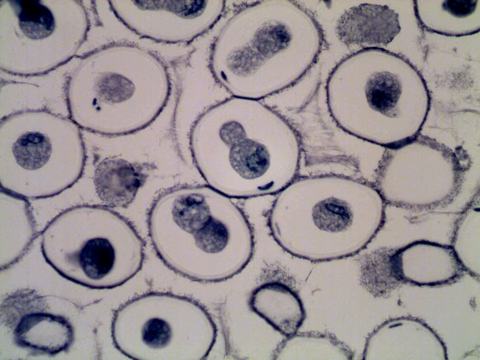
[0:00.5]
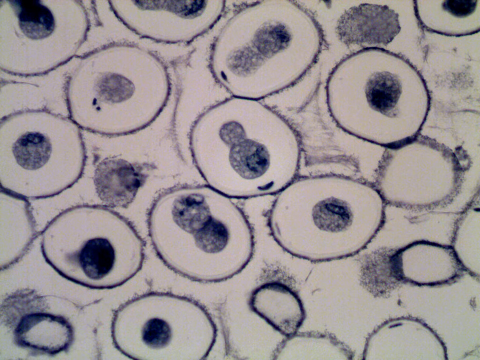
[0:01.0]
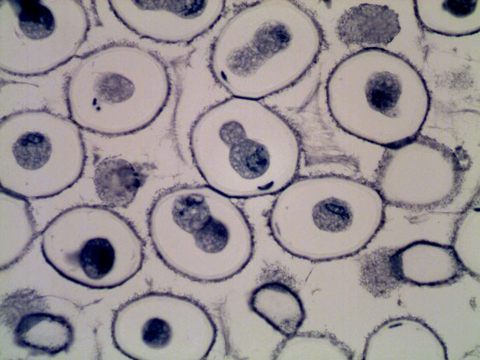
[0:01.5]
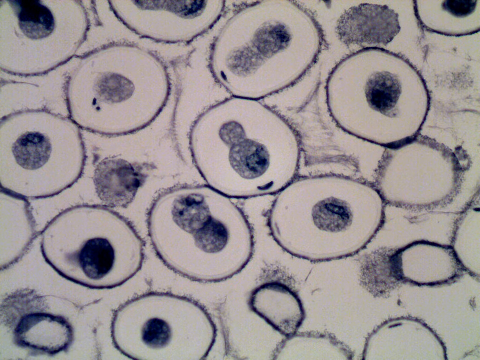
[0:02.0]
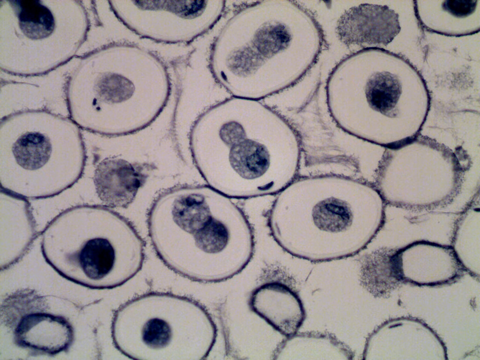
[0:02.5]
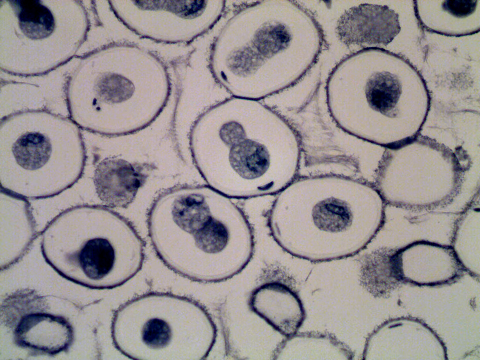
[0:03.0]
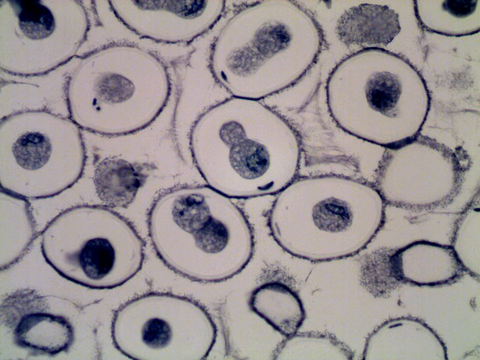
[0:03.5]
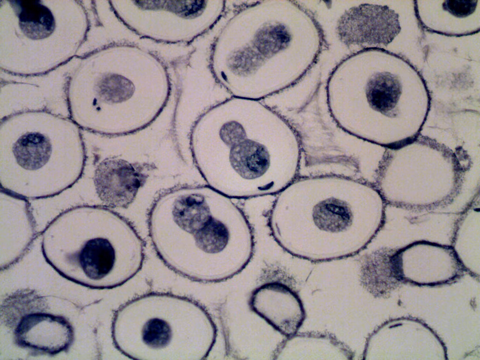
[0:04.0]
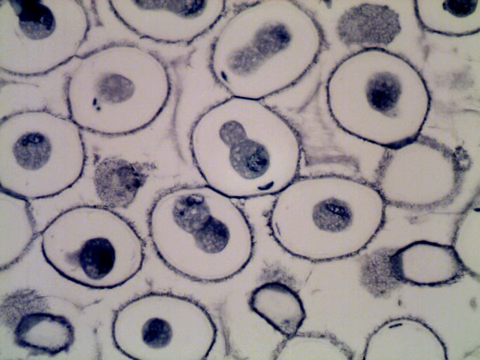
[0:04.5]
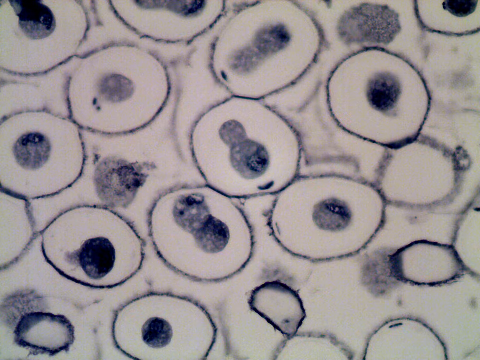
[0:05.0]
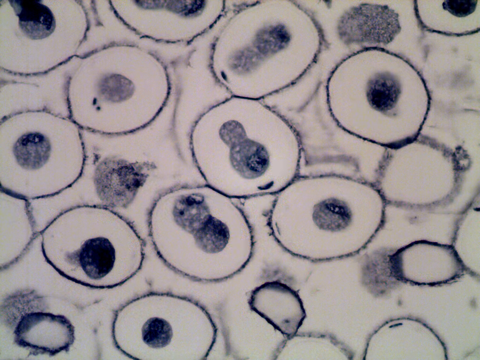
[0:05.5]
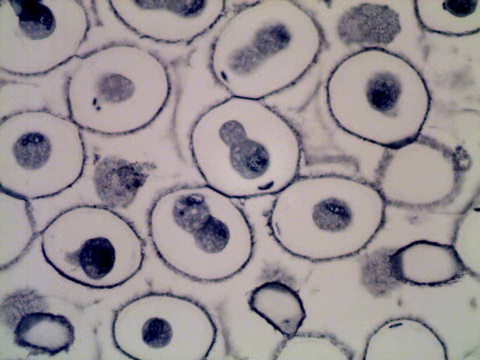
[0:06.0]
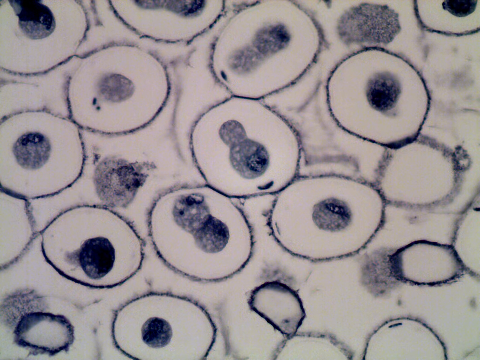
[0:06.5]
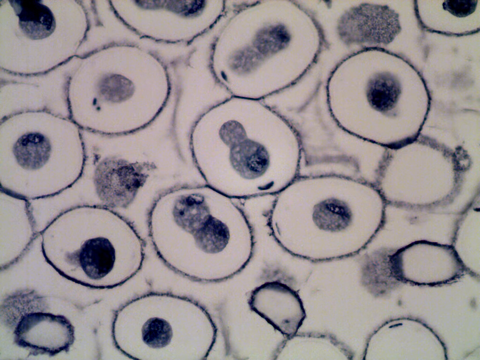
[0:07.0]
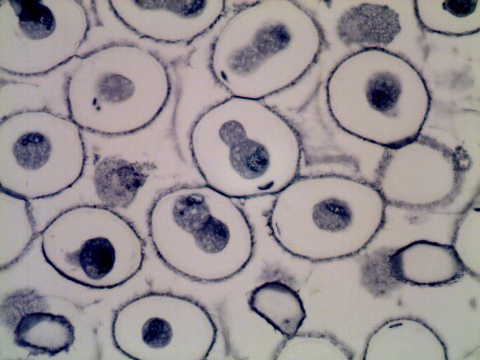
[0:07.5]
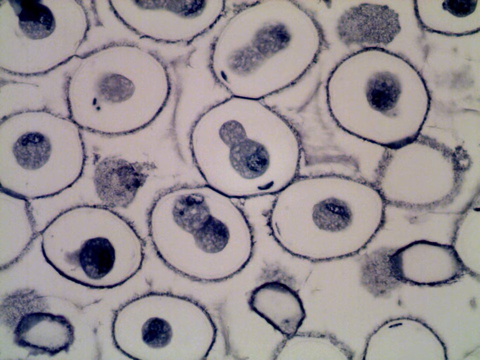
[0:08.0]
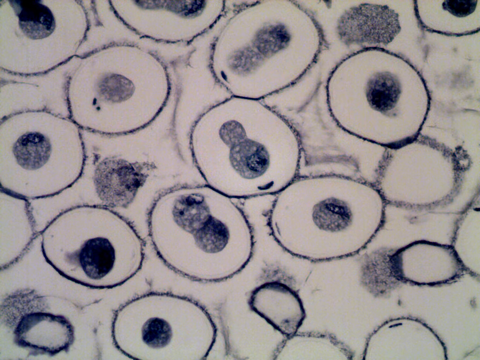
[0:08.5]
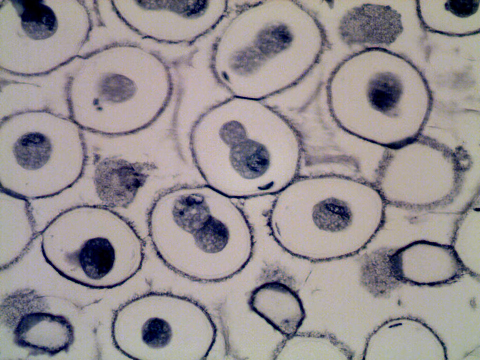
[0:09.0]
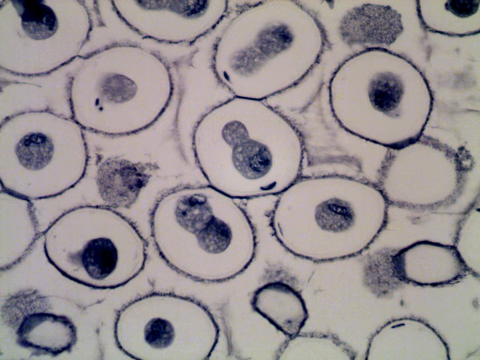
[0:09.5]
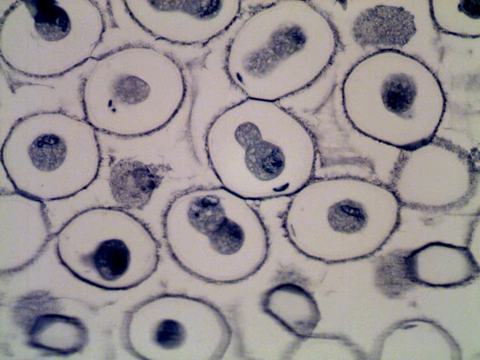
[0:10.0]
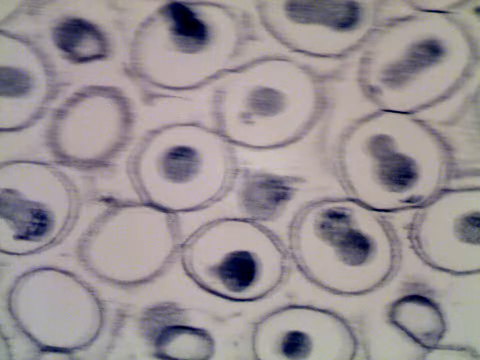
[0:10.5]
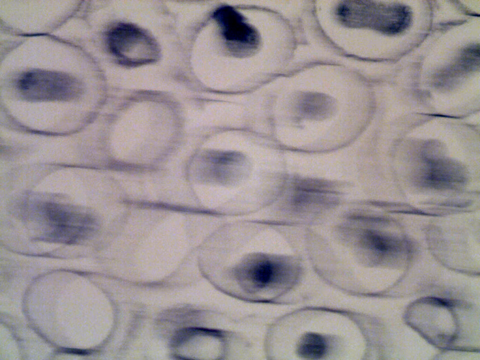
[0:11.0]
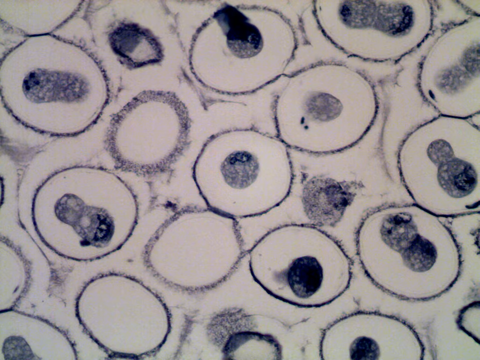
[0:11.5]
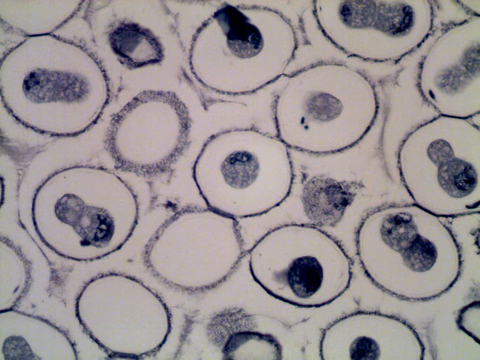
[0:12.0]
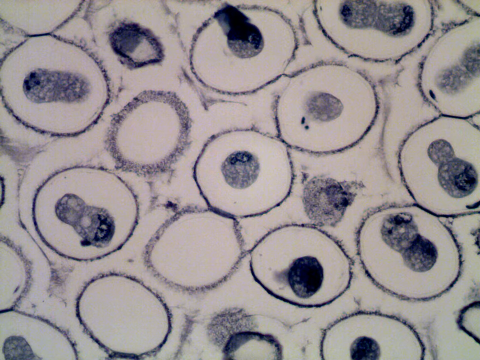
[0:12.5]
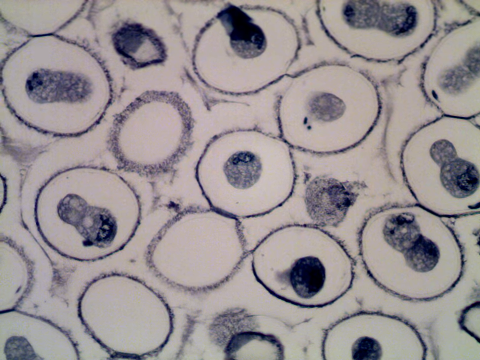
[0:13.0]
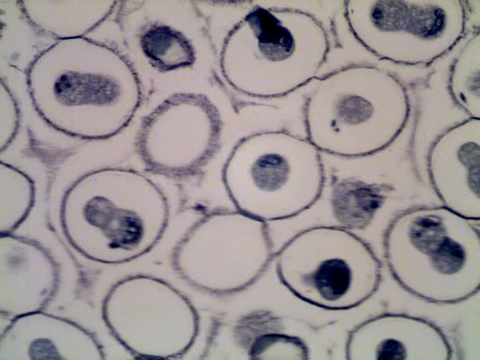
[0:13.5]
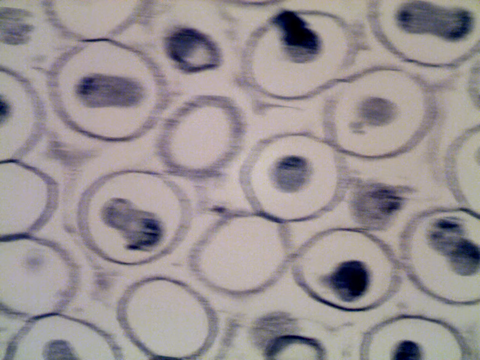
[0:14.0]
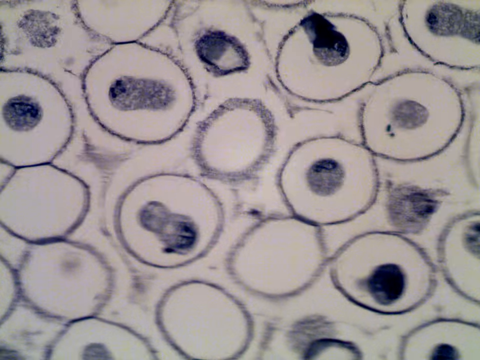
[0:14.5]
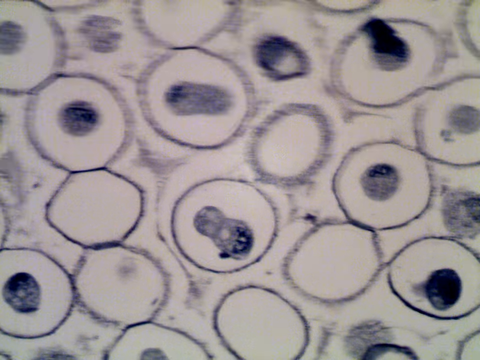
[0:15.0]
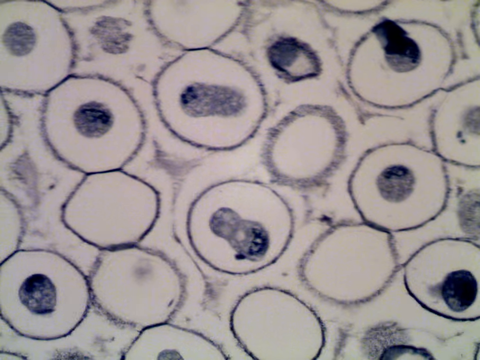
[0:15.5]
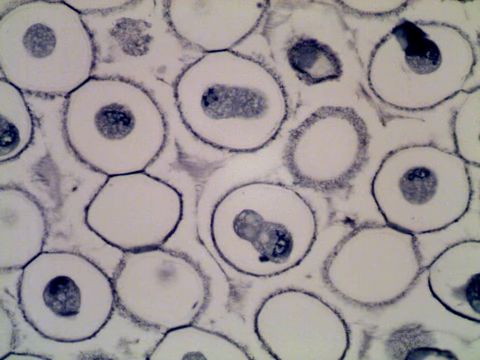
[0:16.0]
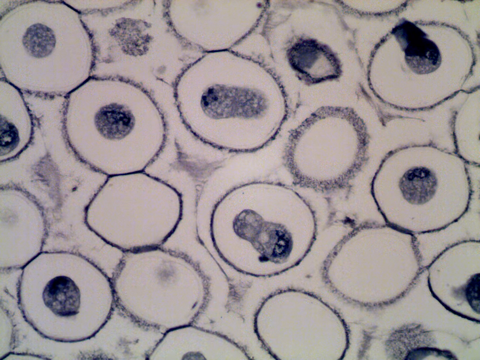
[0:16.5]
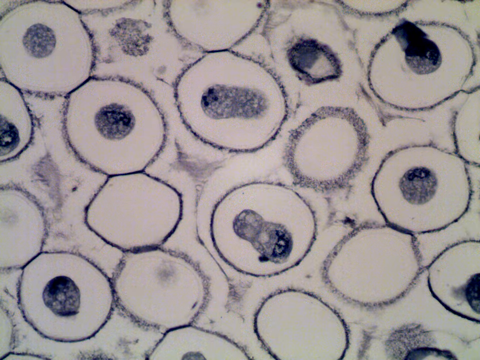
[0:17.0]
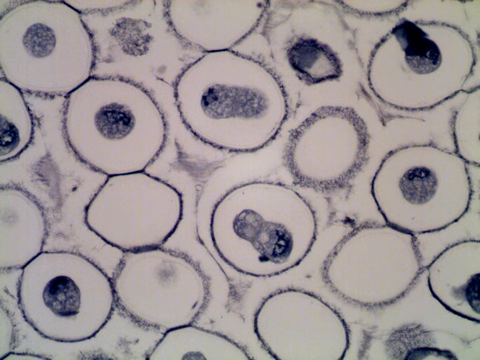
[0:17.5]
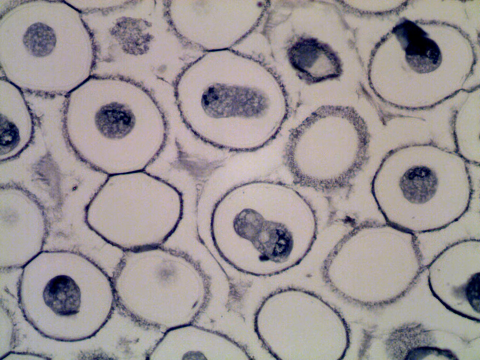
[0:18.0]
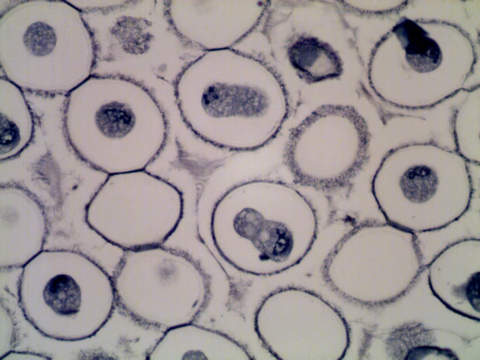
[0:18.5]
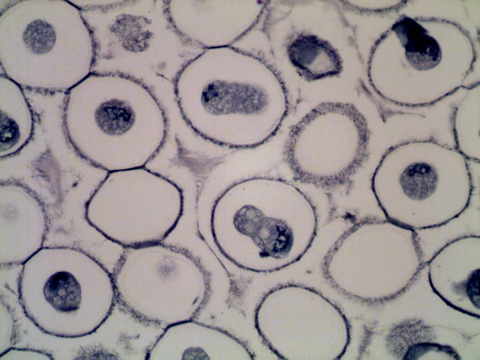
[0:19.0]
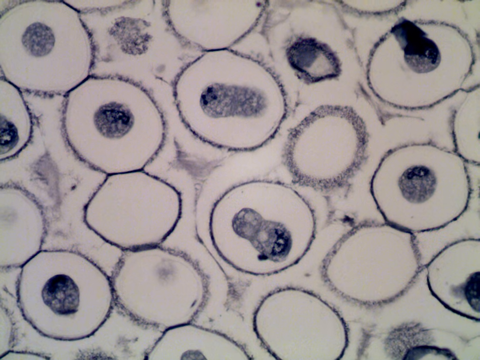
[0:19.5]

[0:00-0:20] The footage appears to be viewed under a microscope and looks very zoomed in on some cells. The background is mainly grey, and there are many circles of quite a dark blue. Inside each circle is a blue sphere that is fully blue inside as well. There is minimal movement, sometimes almost none. Then a big movement shifts the image to the right, probably to look more towards the left of the image, possibly as if the sample were being moved under a microscope. Throughout, the circles present the same homogeneous look of a blue circle with a blue sphere inside, though some have a peanut shape inside instead.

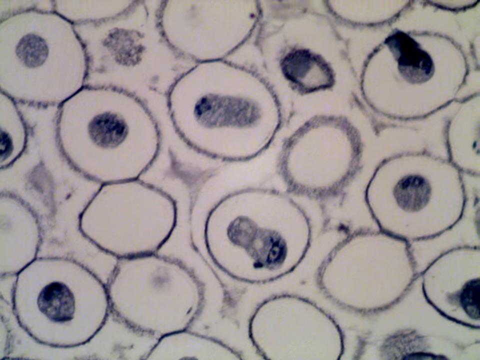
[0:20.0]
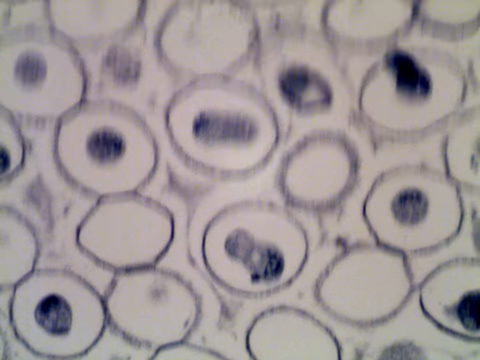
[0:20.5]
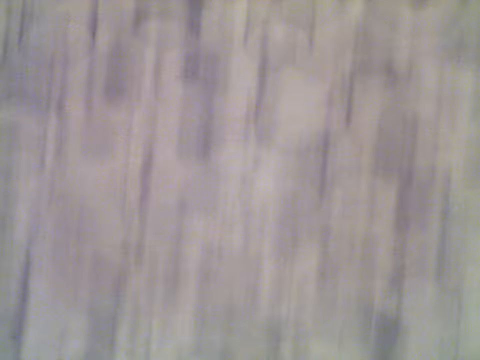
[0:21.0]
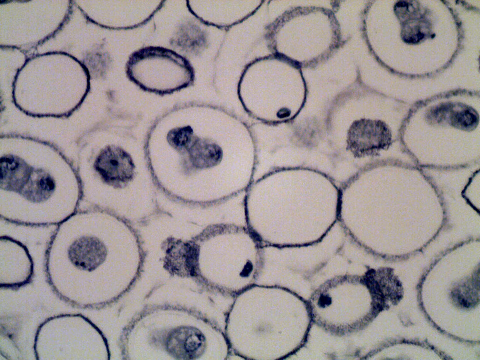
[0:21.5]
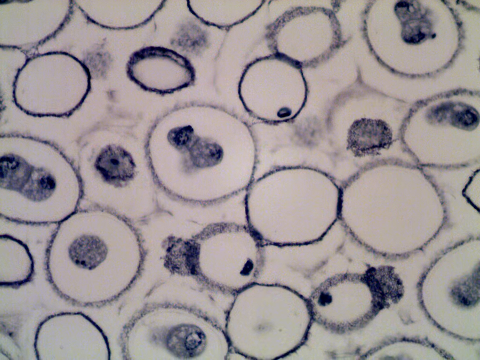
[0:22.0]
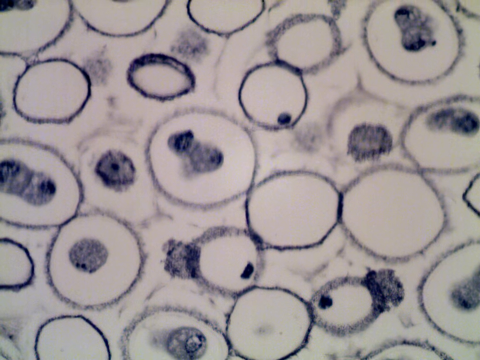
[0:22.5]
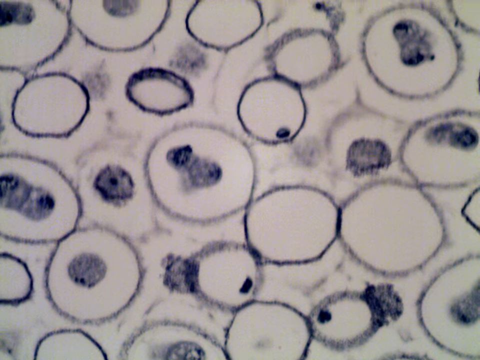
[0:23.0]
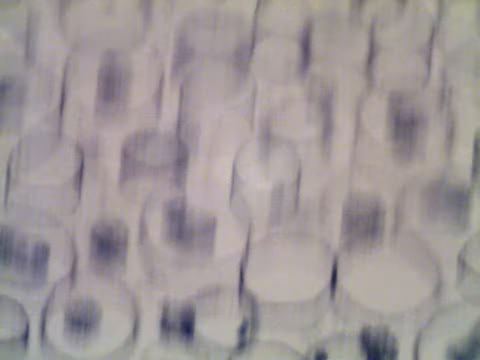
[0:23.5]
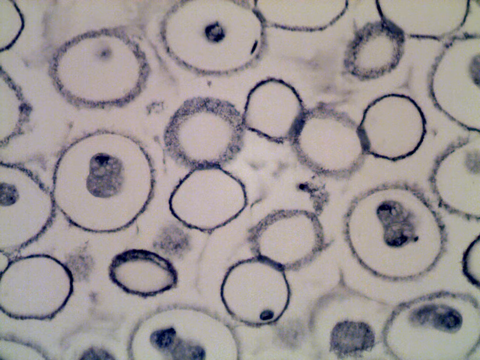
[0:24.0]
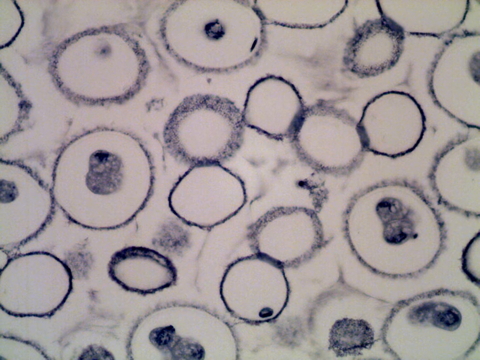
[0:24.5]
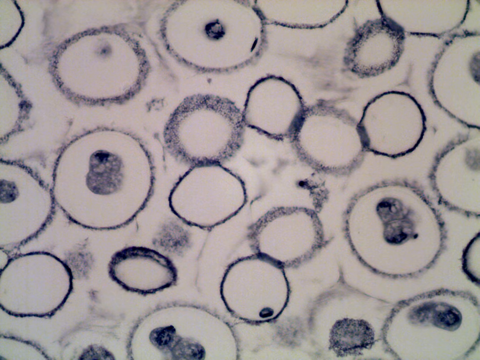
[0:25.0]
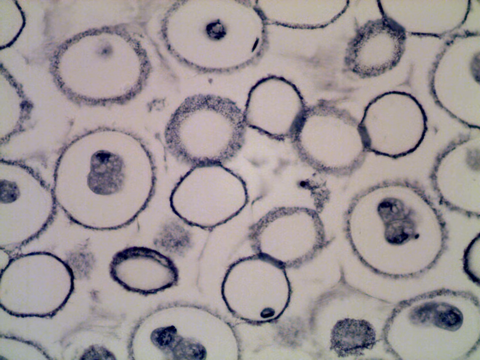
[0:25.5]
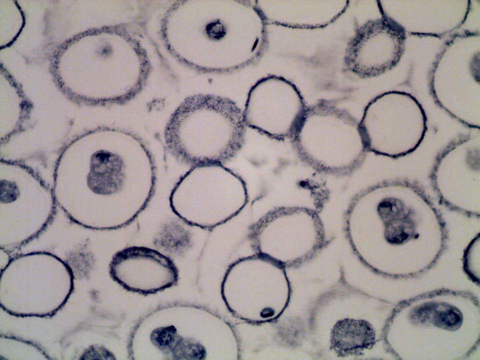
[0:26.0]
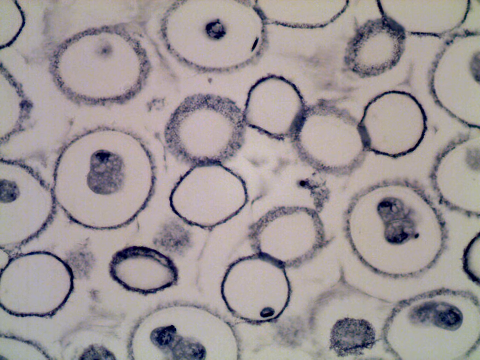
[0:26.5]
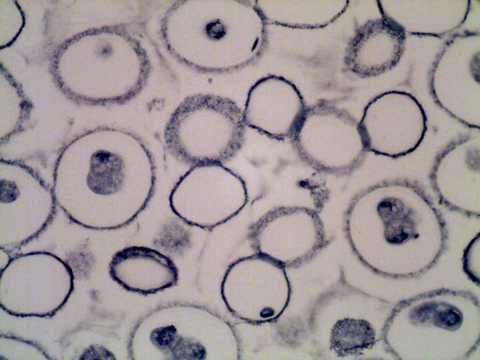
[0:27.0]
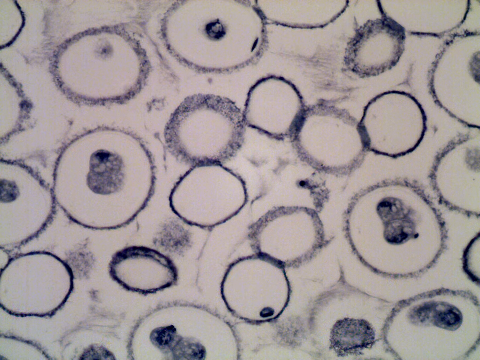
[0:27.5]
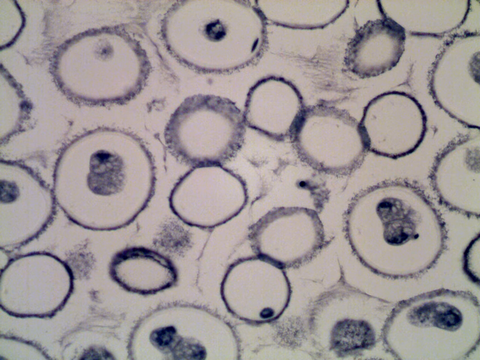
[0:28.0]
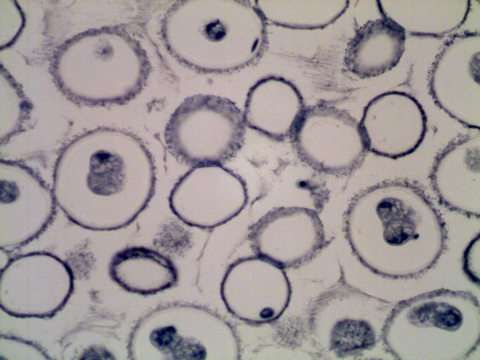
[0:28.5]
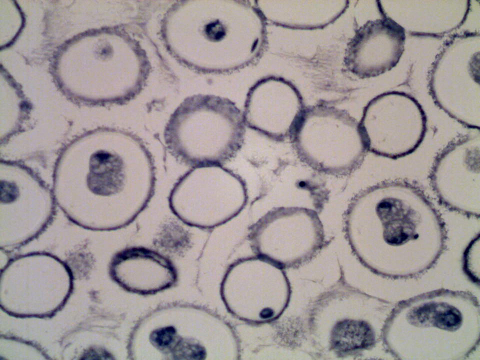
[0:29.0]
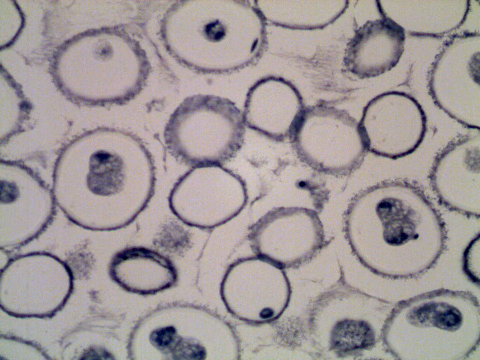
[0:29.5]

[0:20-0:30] Against a grey background are what look like some sort of cells: mainly blue circles with blue spheres inside. Not all of the shapes are fully spherical; some are more like a peanut shape, and some look kind of like they are bursting, going a bit over the circle line, though most stay within the circle. There are also empty circles with nothing inside. The image moves down, perhaps as if someone were looking through a telescope and pulling it down, showing more of the top part, where there are many empty circles. There are also bubbles.